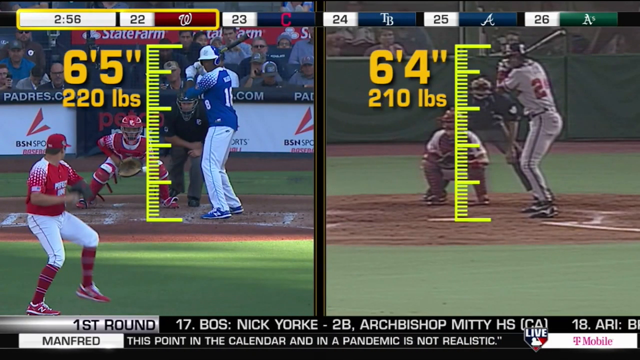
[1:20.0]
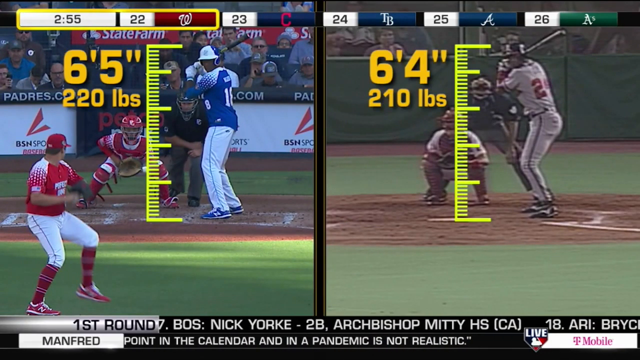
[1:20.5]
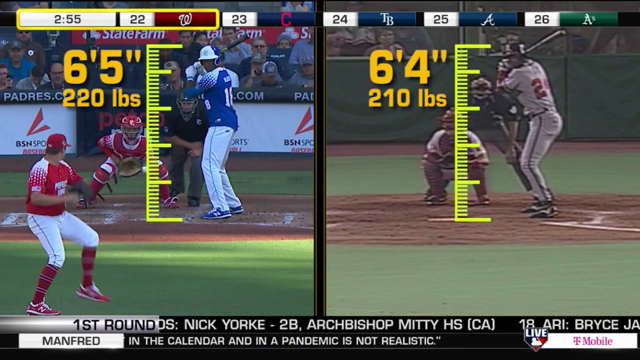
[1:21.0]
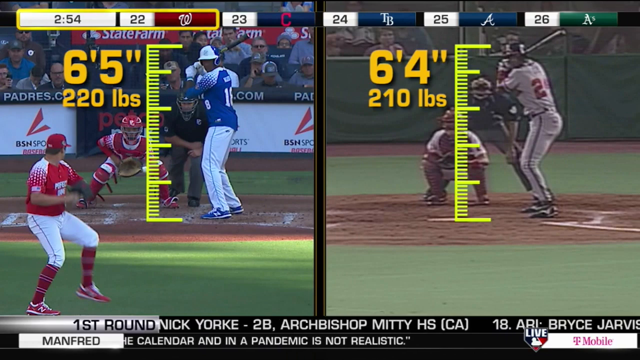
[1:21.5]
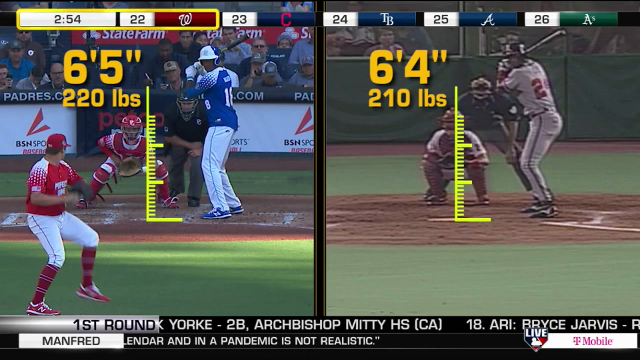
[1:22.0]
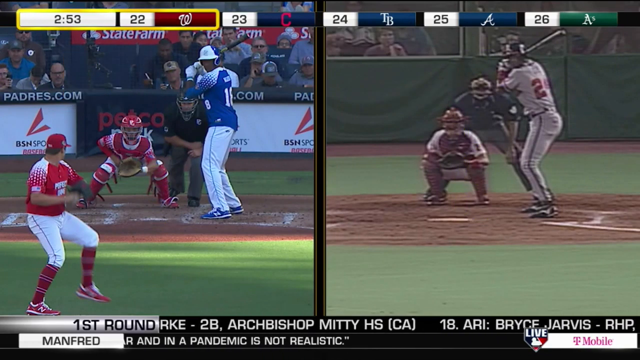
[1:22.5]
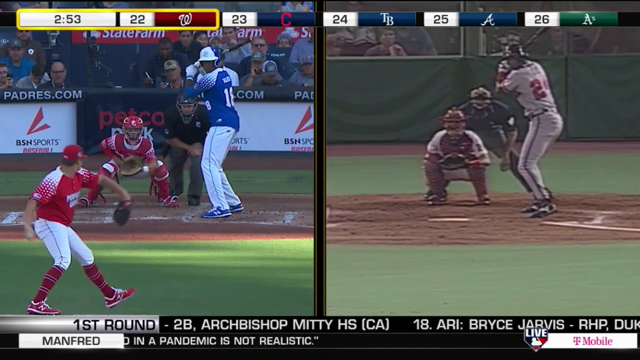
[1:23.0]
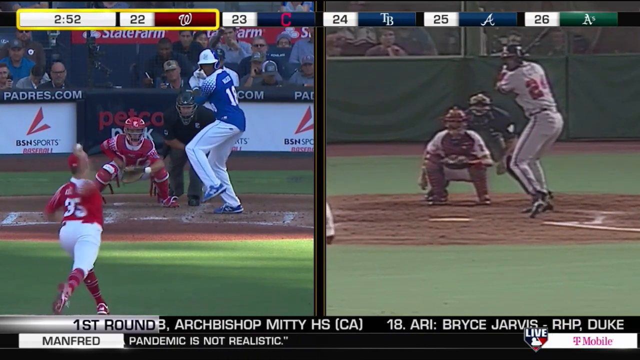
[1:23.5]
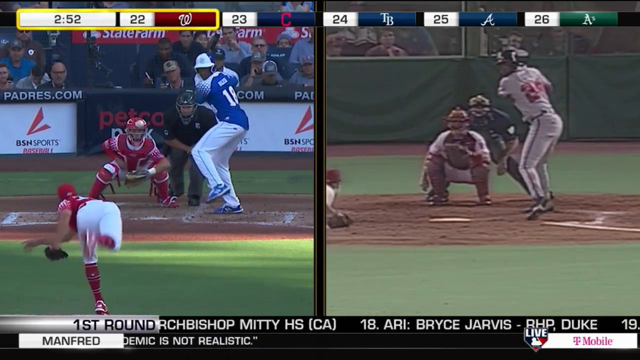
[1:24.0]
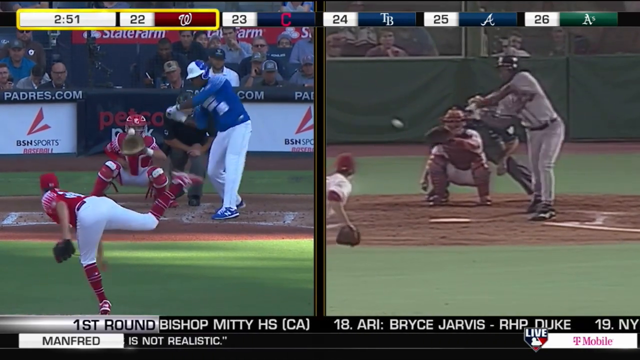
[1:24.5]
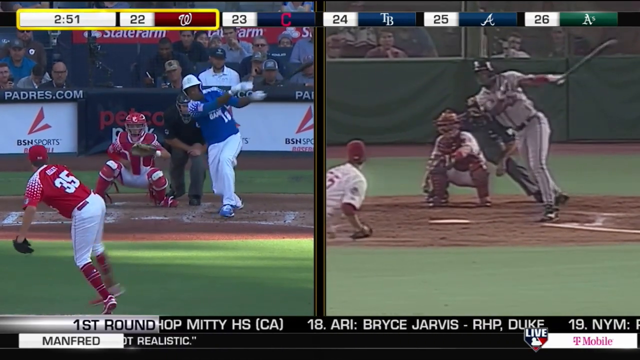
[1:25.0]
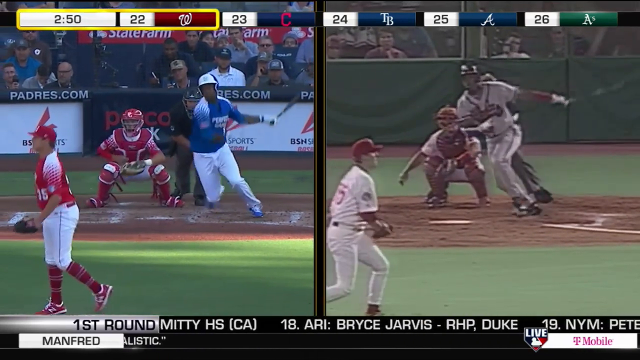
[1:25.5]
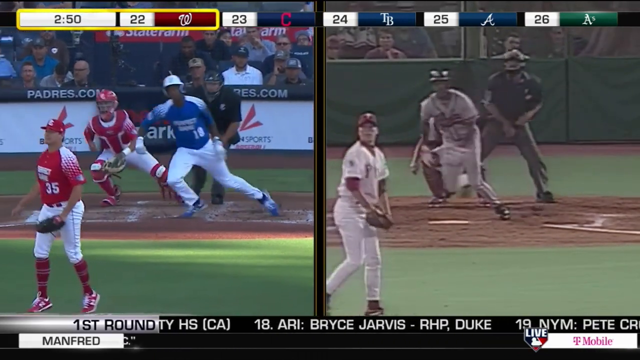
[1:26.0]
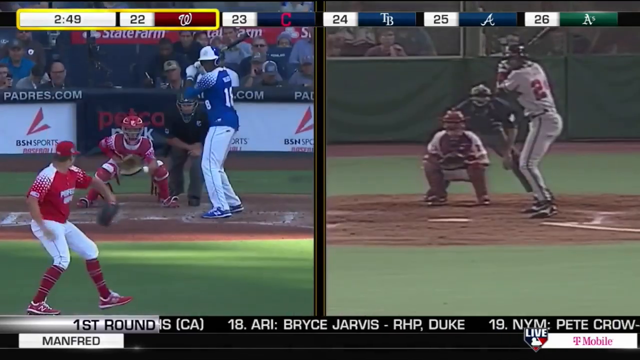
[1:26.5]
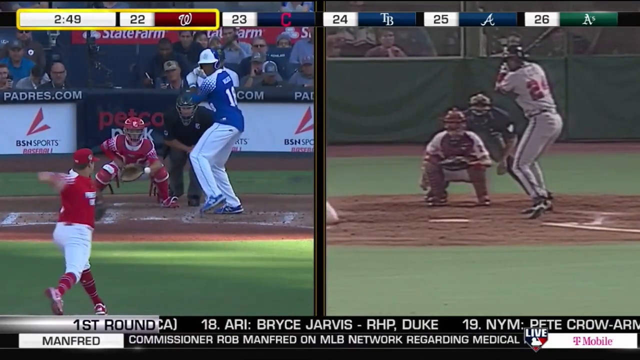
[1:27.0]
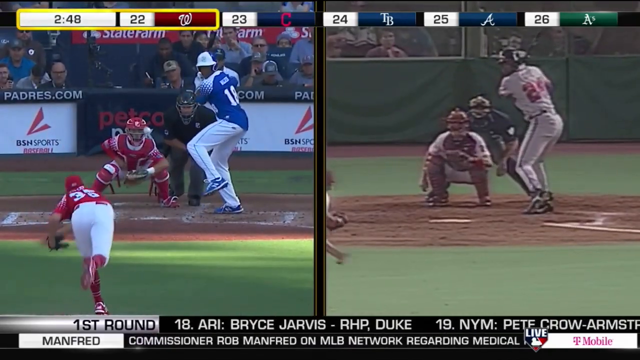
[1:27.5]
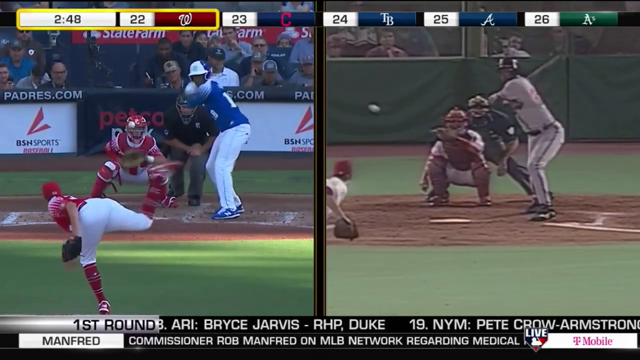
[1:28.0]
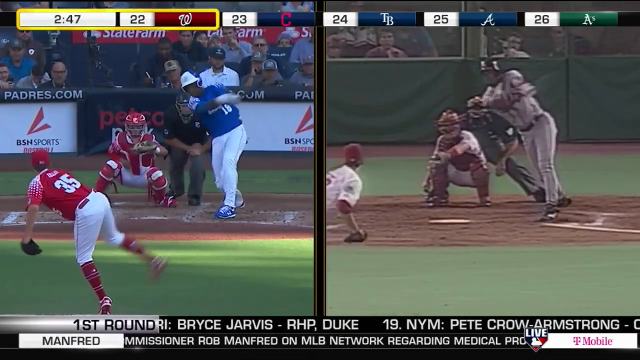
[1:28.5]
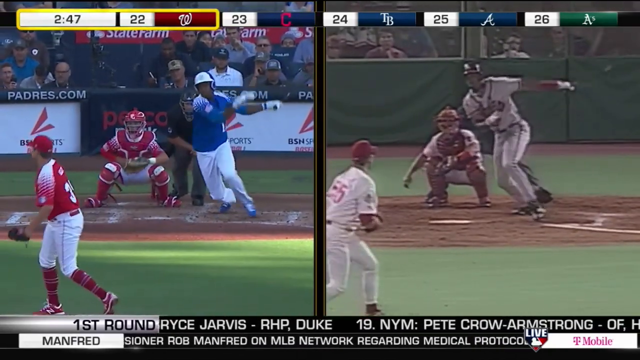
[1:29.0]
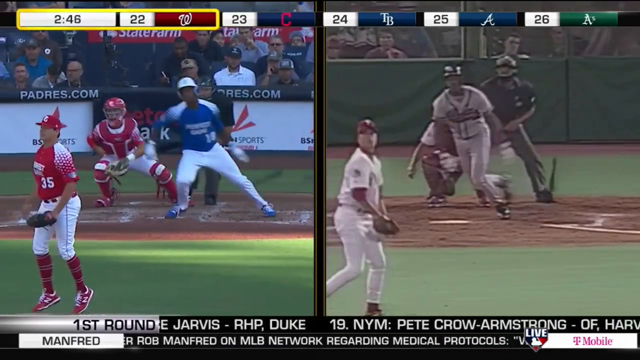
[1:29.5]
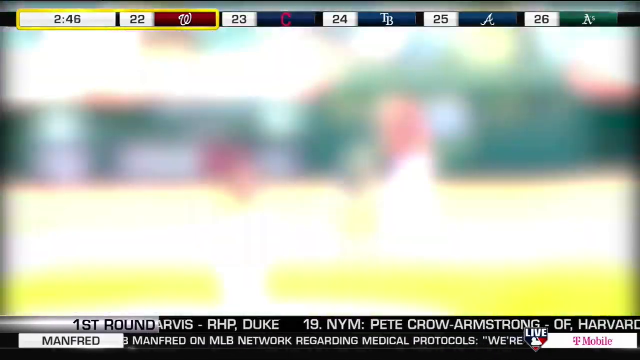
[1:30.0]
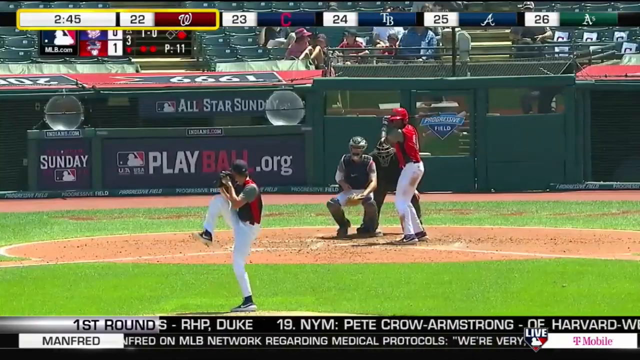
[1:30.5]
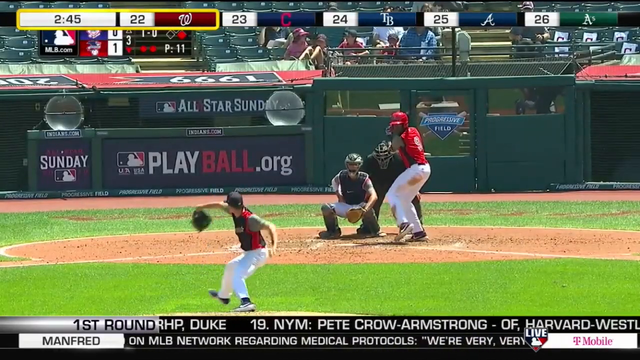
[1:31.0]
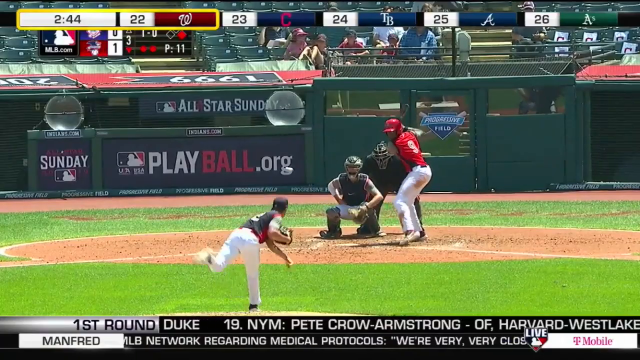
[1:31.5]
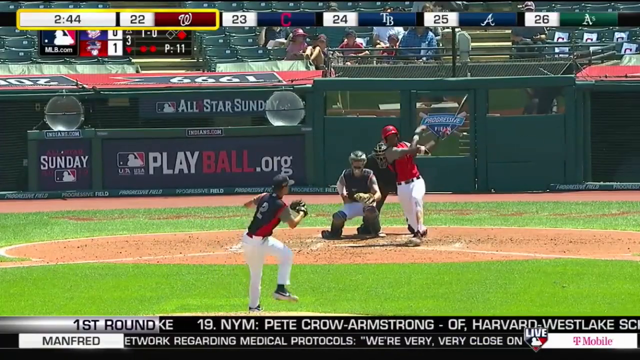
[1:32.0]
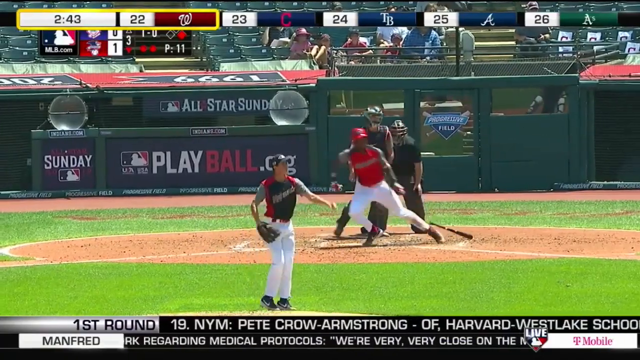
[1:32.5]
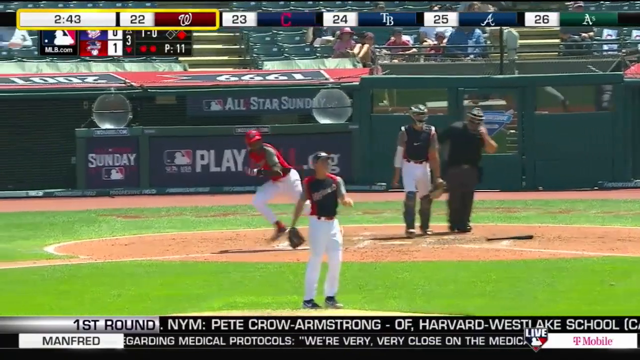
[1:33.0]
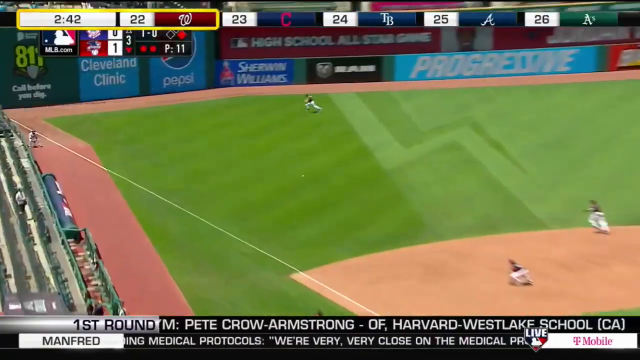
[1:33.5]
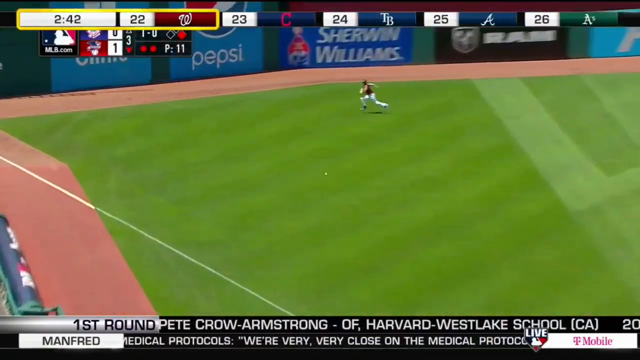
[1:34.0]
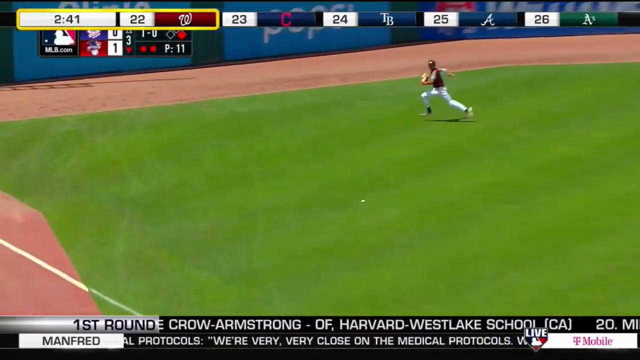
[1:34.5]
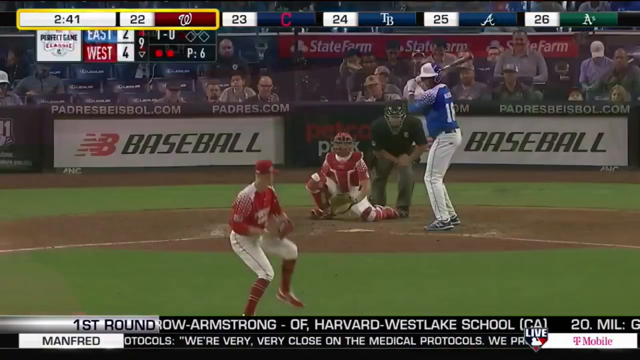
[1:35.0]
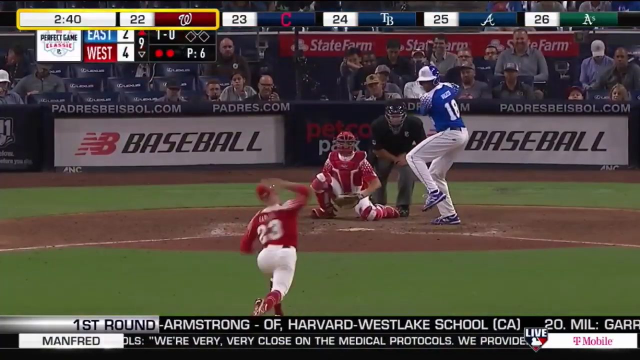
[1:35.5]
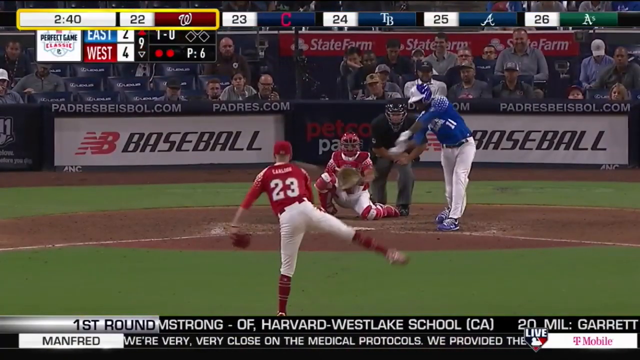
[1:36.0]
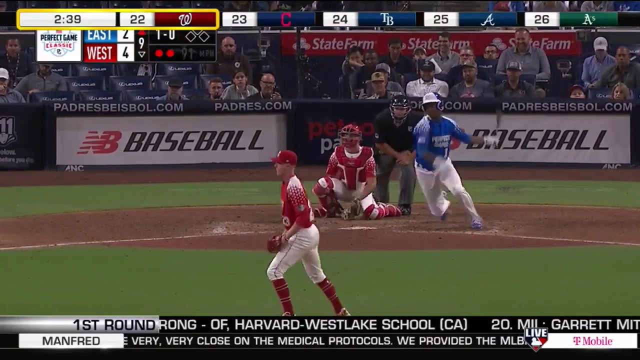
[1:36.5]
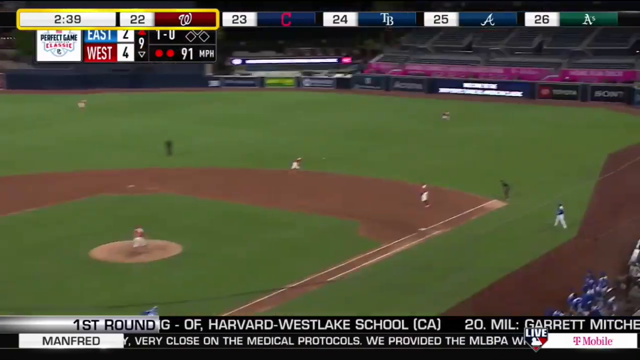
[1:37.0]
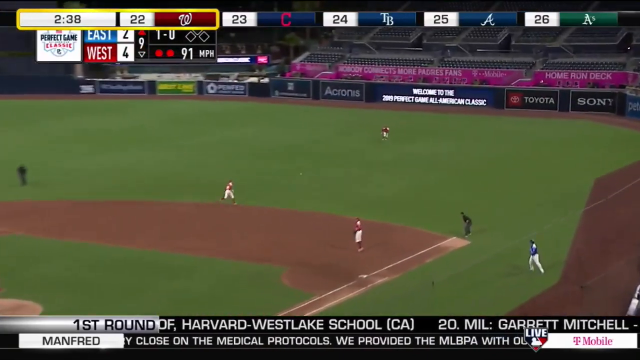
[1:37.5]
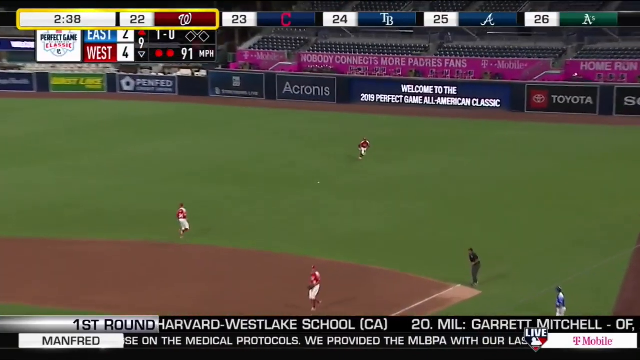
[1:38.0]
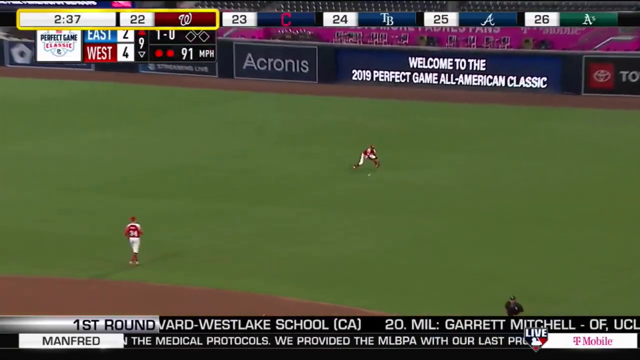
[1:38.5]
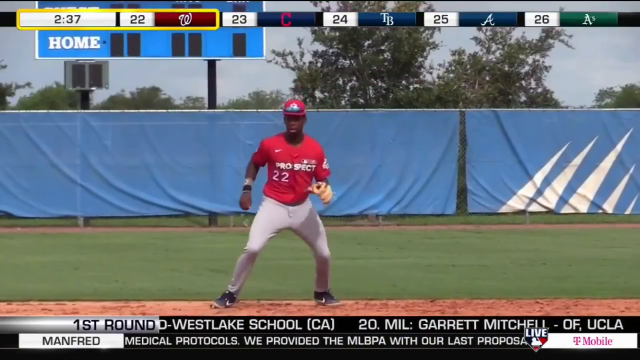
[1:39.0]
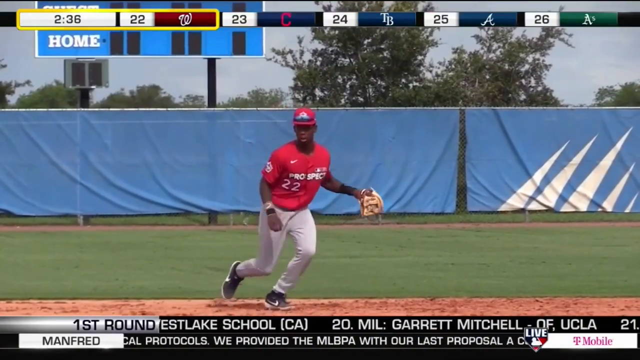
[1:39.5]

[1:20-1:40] The side-by-side continues as the graphic comparing the two players' height and weight fades away. In both images the pitch is made, and both batters hit the ball off the very end of the bat. Both pitchers turn toward the outfield to see where the ball has gone, and both batters drop their bats and run toward first base. The sequence repeats. After a transition, Walker is up at bat in a red jersey, red helmet and white pants. He raises his left leg slightly as the ball is thrown, steps toward the pitch, pulls the ball toward third base, drops his bat and begins to run. The video cuts to the outfield, where an outfielder runs in from the right side of the screen toward the ball but does not catch it, so it is a hit. Another shot shows Walker making a similar hit, this time to right field, also a hit because the outfielder is unable to catch it.